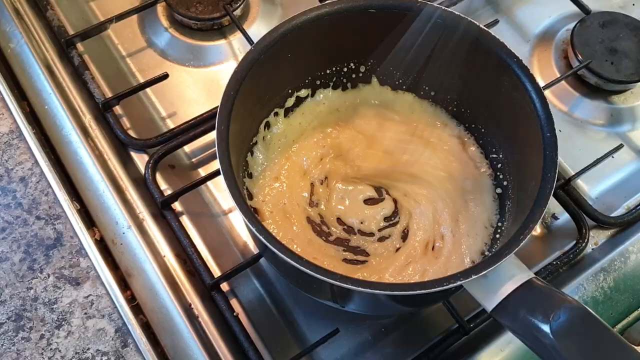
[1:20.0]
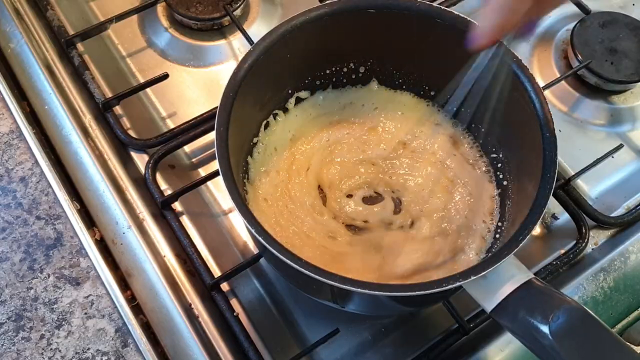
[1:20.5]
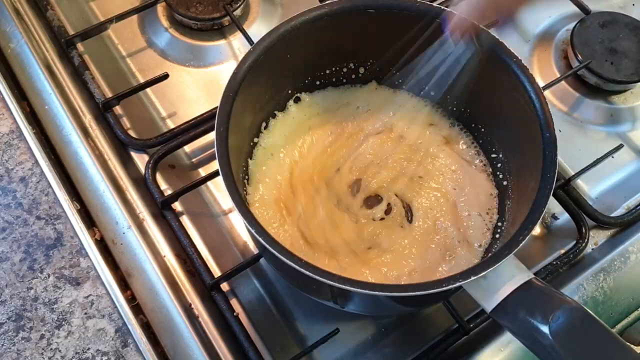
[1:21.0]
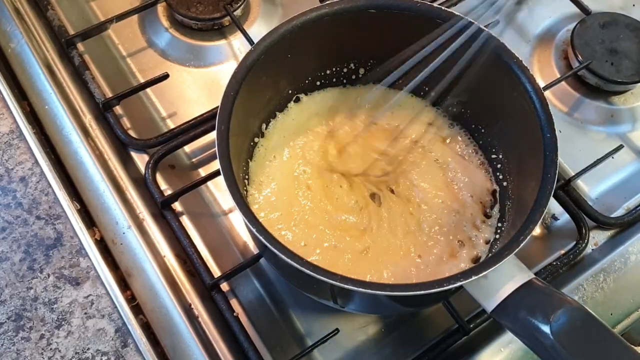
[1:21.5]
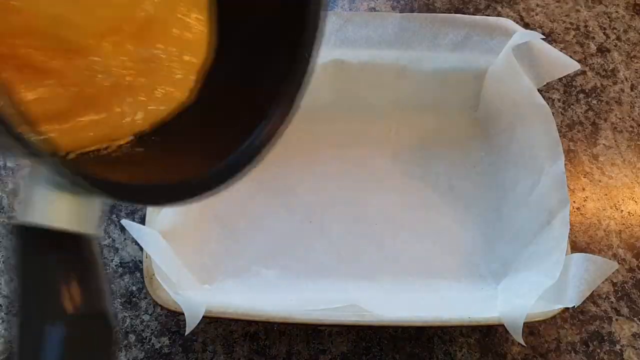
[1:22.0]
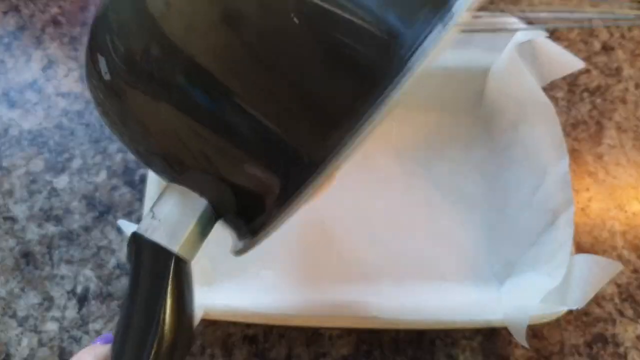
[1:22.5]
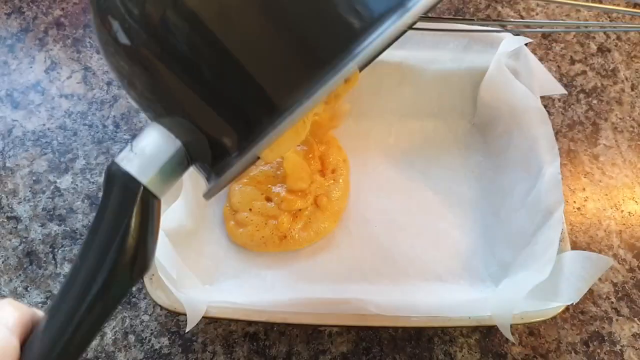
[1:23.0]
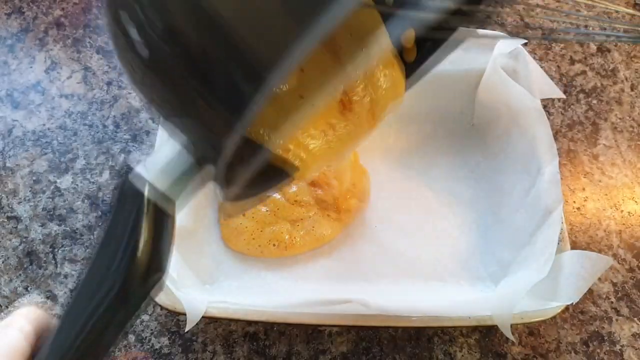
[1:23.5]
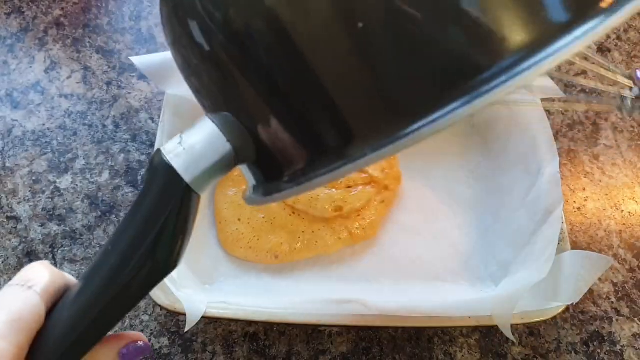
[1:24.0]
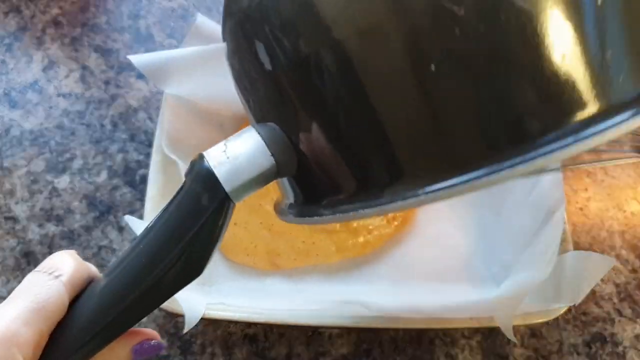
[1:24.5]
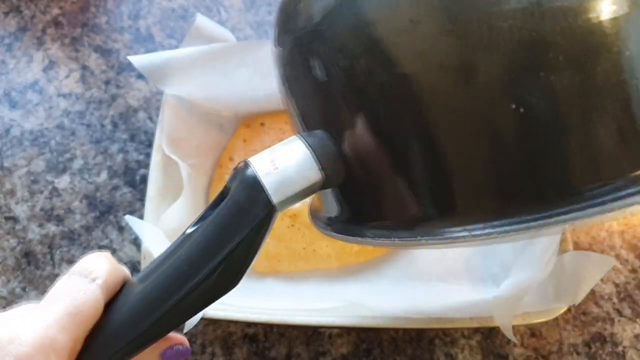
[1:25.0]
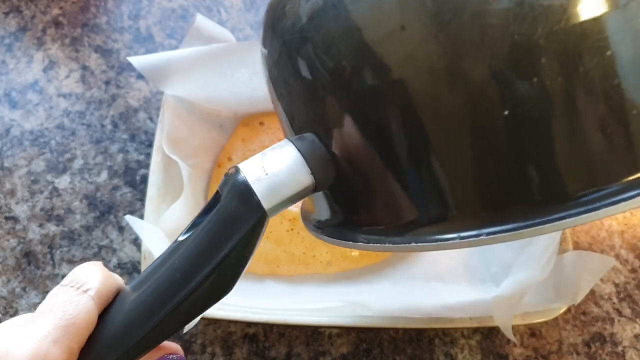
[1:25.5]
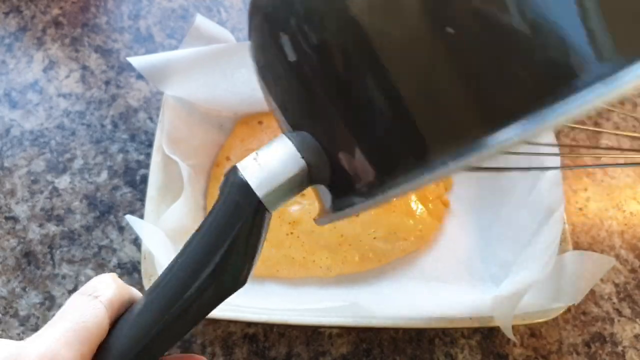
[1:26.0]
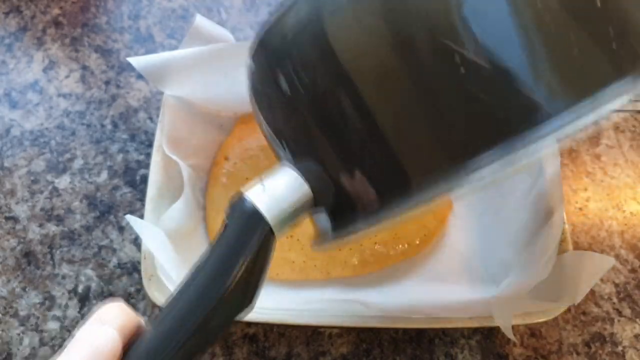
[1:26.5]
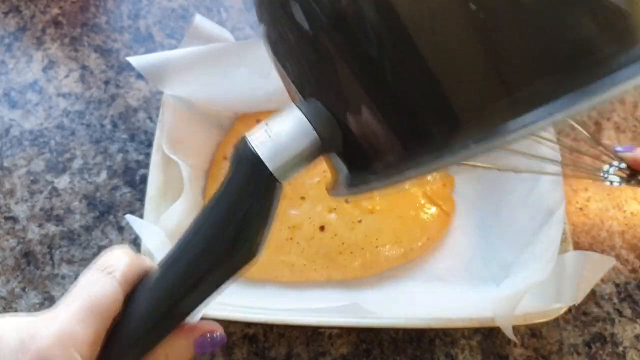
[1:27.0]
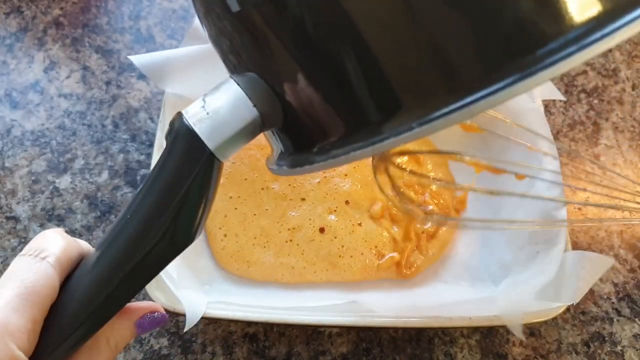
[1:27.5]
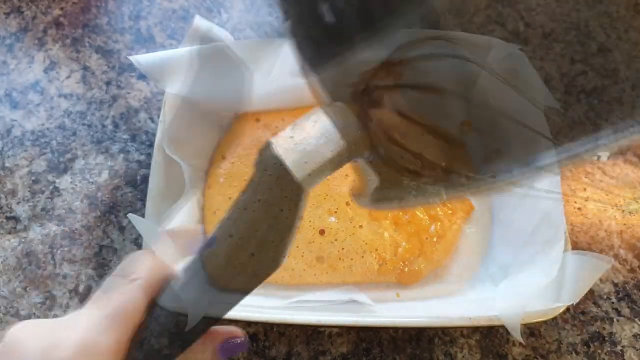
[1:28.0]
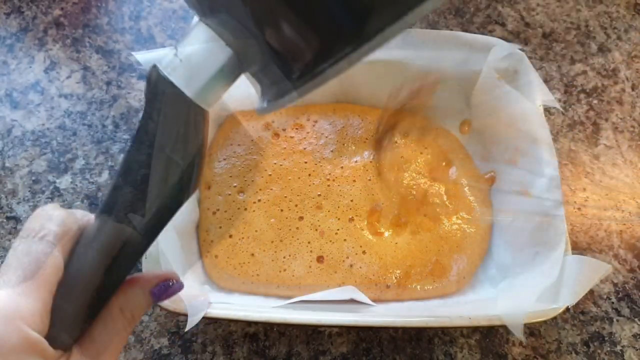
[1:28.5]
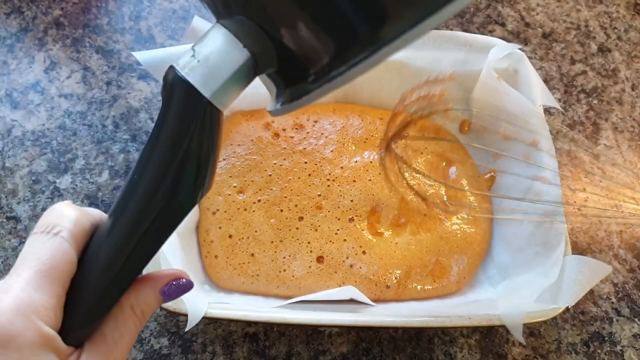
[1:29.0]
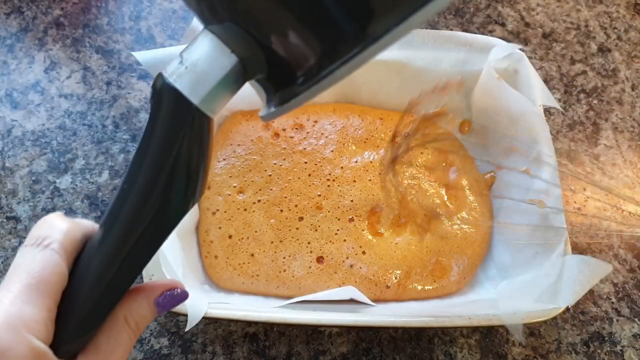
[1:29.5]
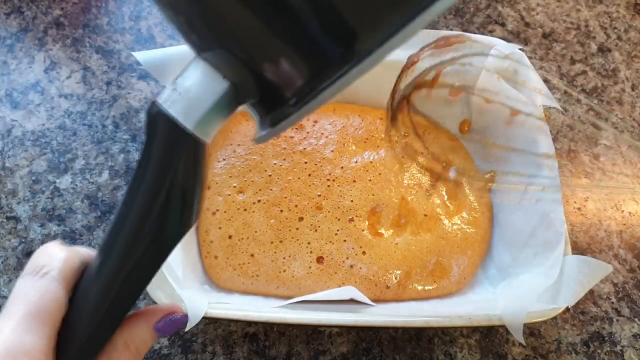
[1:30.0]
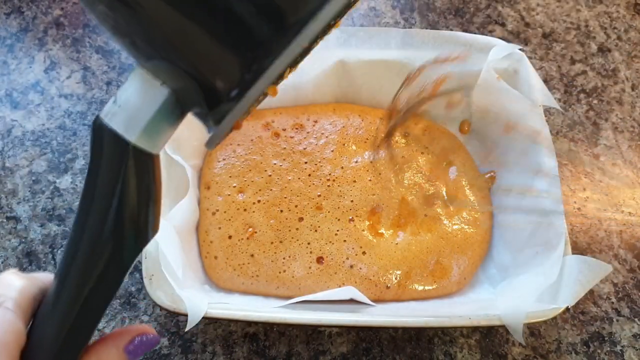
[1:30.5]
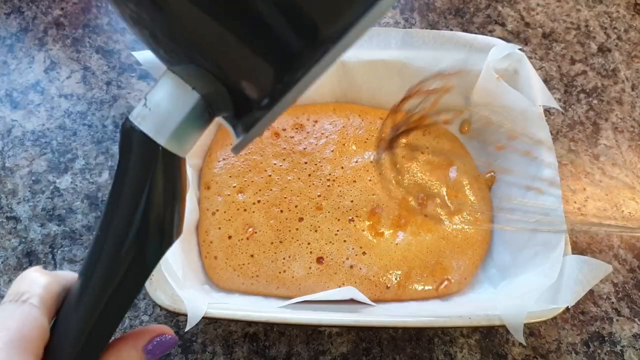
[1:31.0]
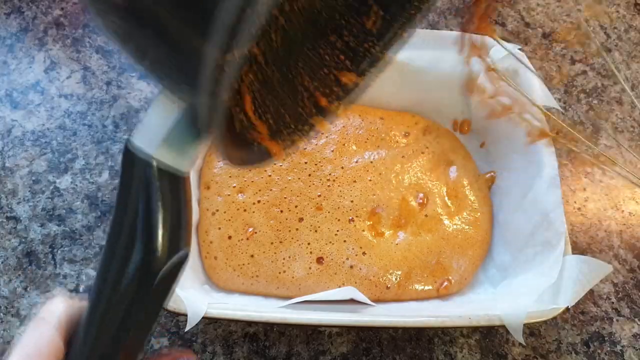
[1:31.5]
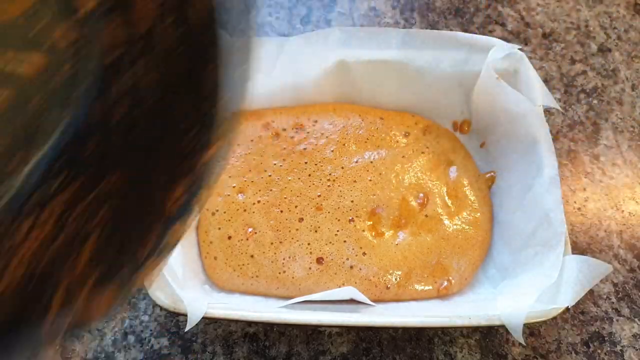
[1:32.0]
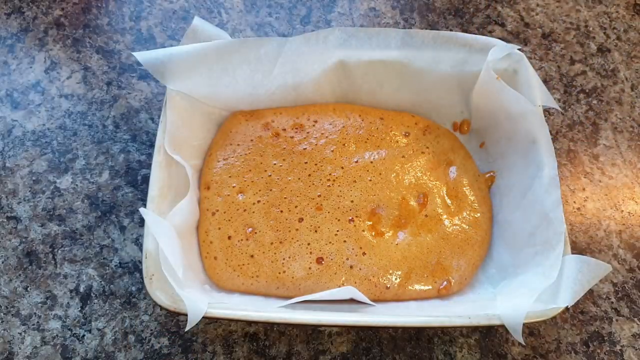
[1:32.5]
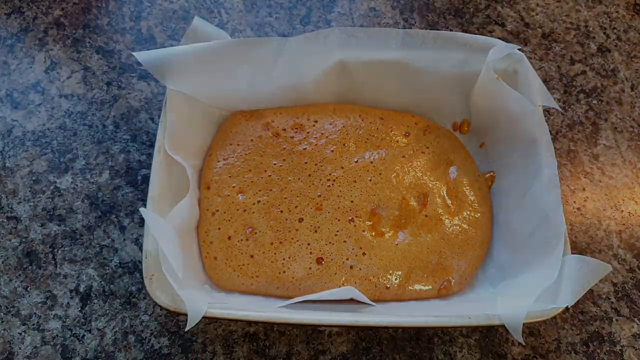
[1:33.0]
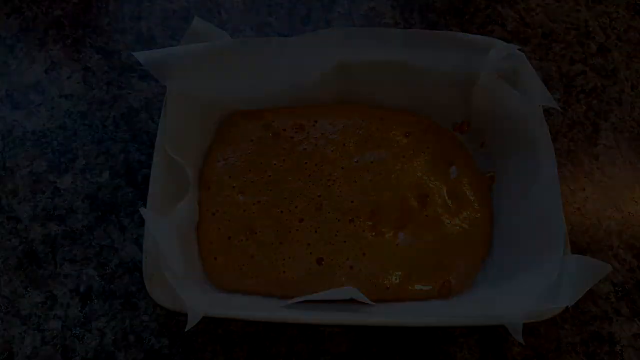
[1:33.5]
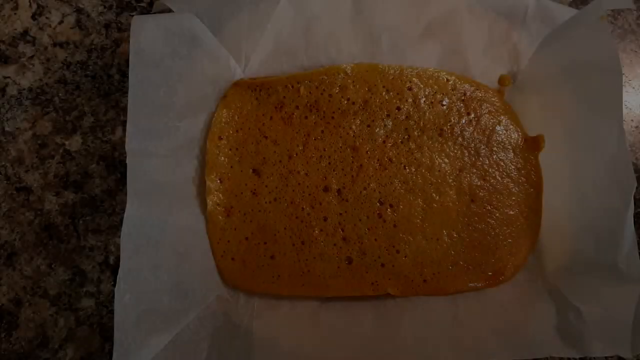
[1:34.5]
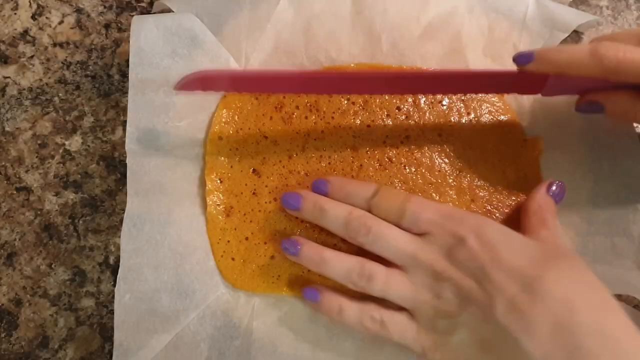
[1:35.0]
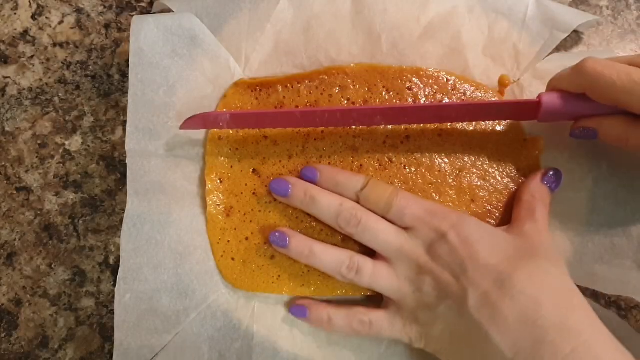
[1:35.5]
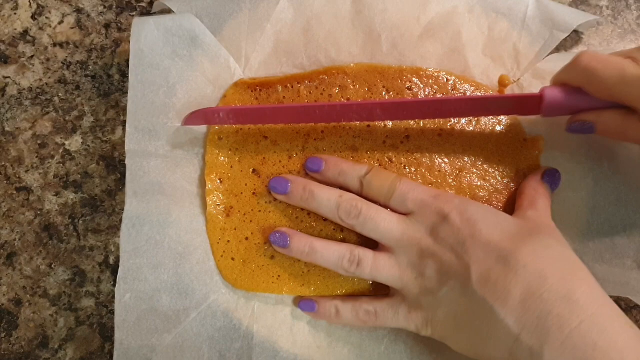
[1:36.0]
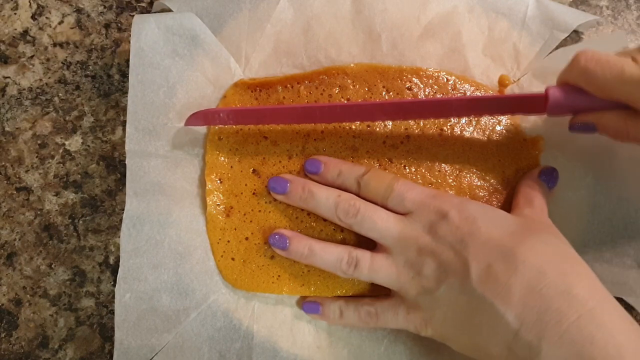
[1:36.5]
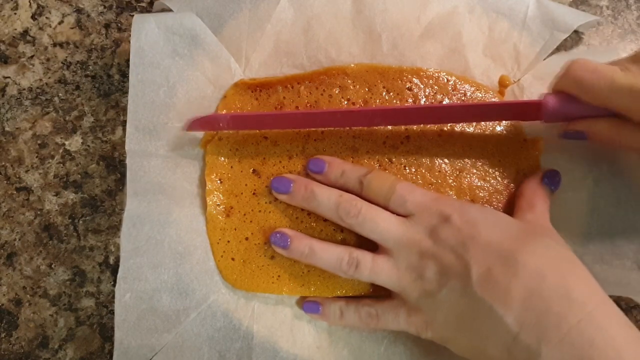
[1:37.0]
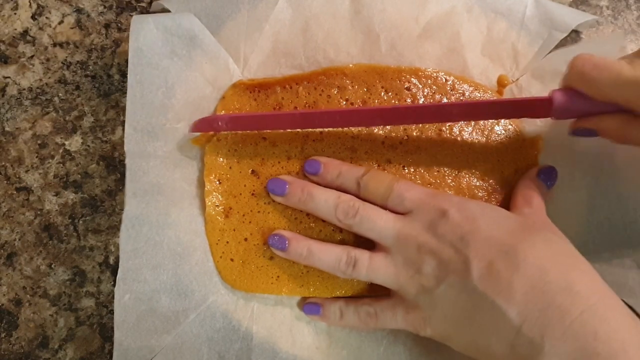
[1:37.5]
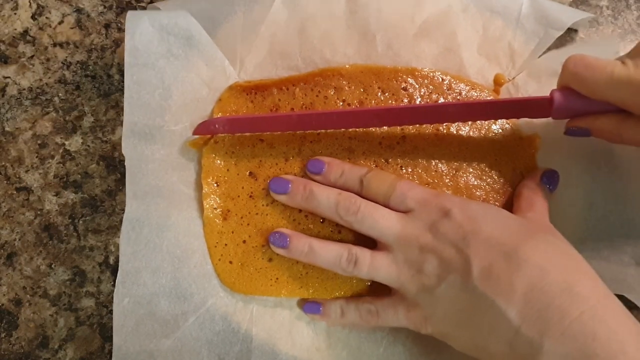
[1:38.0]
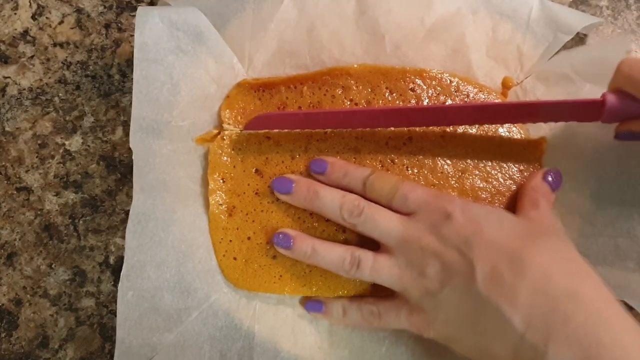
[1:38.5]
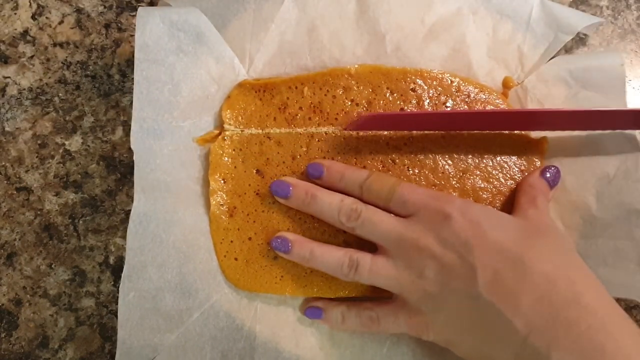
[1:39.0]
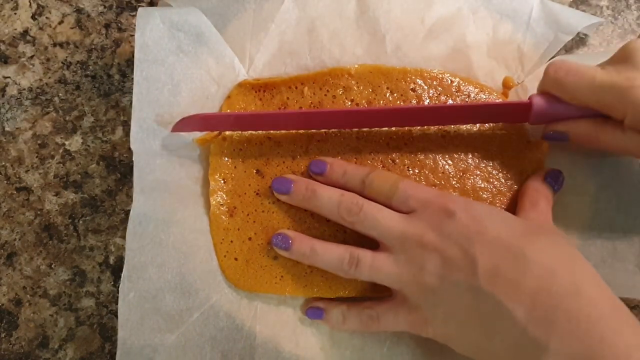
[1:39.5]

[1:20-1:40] The mixture continues to bubble as it is mixed with the metal whisk. The video then transitions to the mixture, still bubbly and light tan, being poured into the parchment-lined pan. Once the pot is empty, the whisk is tapped on the edge of the pan several times to get the last bit in. Next, the mixture is shown in the pan after it appears to have cooled down some and hardened. Two white hands with purple painted nails bring a pink knife, apparently serrated, into frame and begin cutting into the hardened mixture. It creates a score line but does not appear to cut through yet. The left hand also looks like it has a band-aid on the pointer finger at the knuckle.